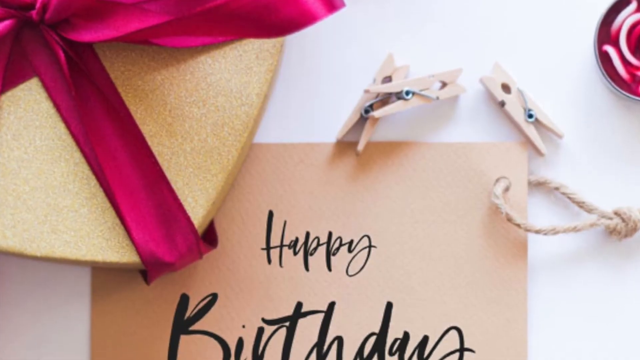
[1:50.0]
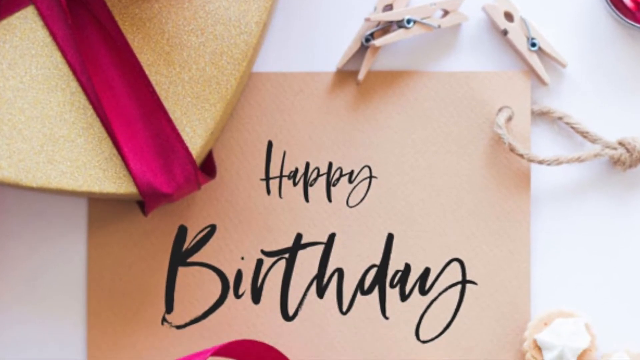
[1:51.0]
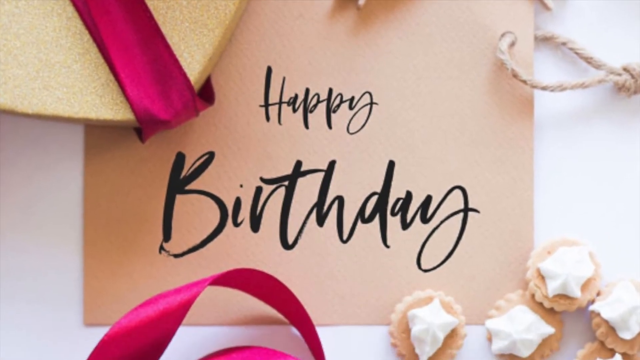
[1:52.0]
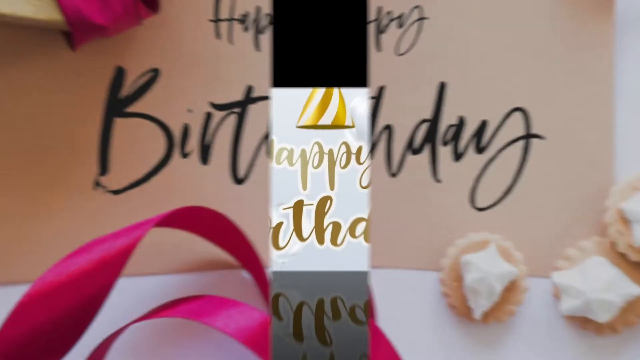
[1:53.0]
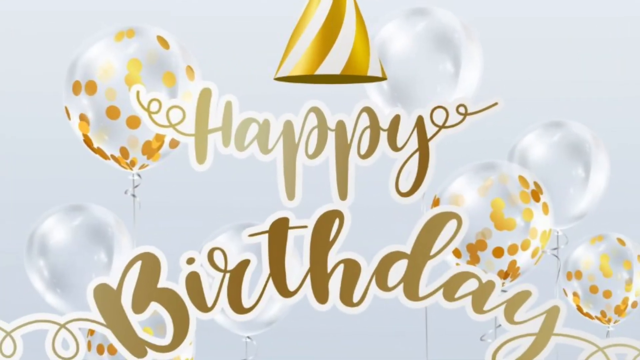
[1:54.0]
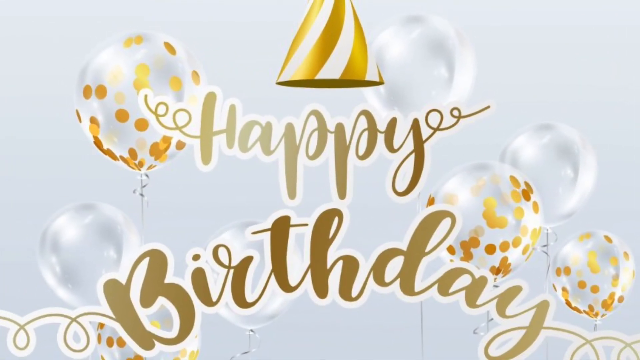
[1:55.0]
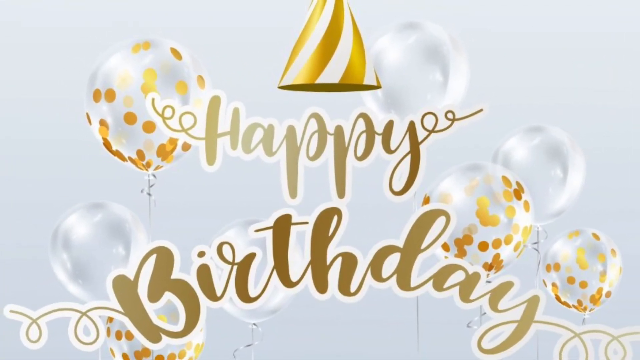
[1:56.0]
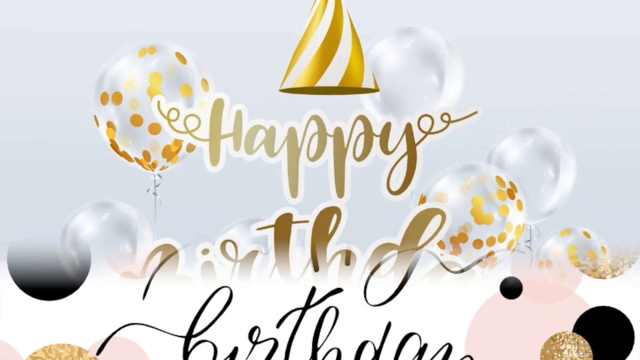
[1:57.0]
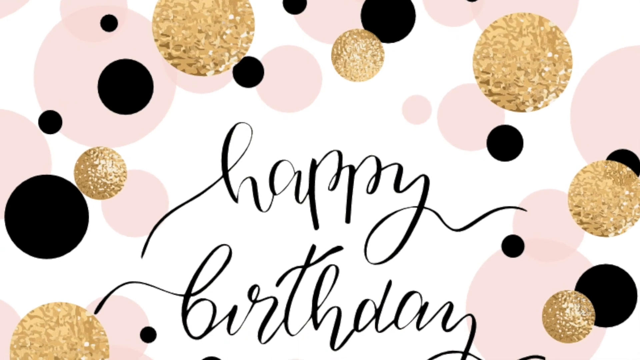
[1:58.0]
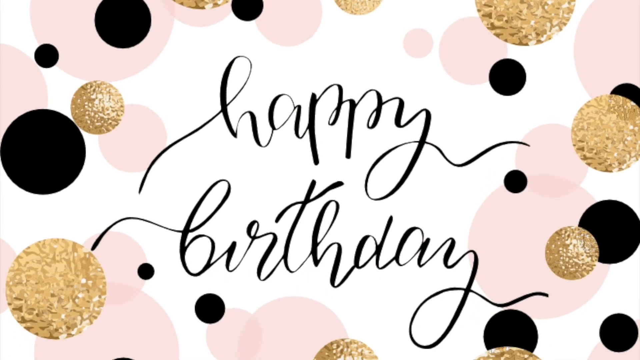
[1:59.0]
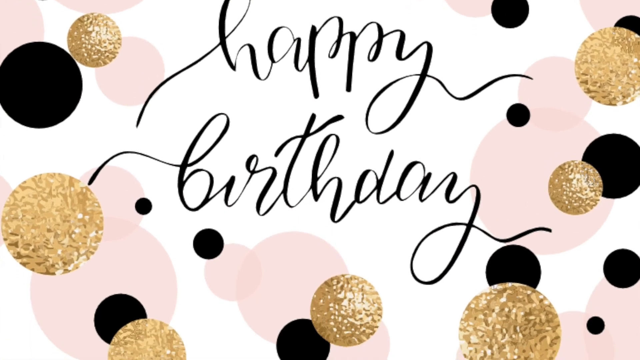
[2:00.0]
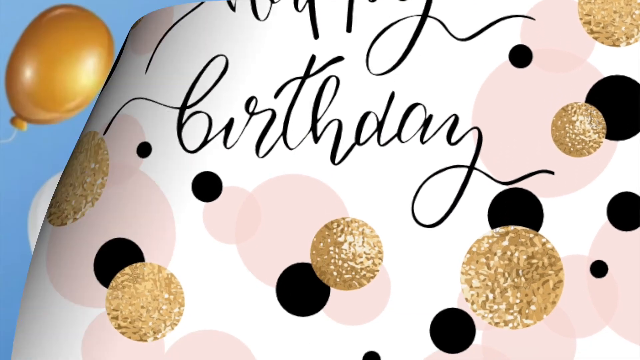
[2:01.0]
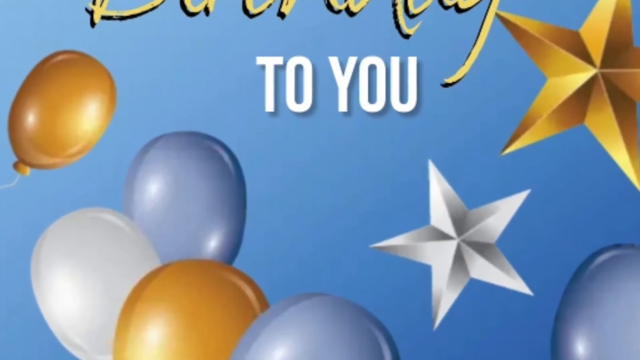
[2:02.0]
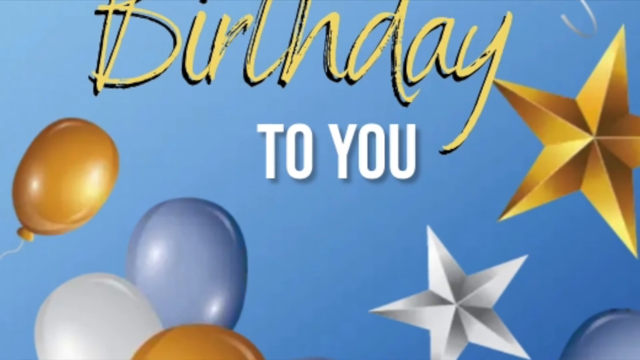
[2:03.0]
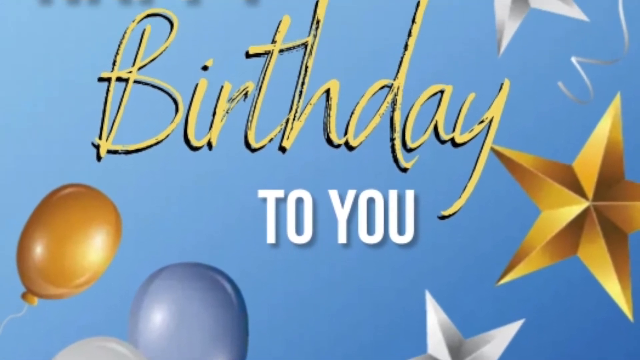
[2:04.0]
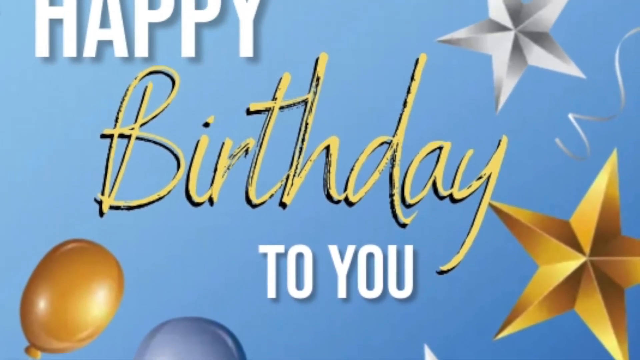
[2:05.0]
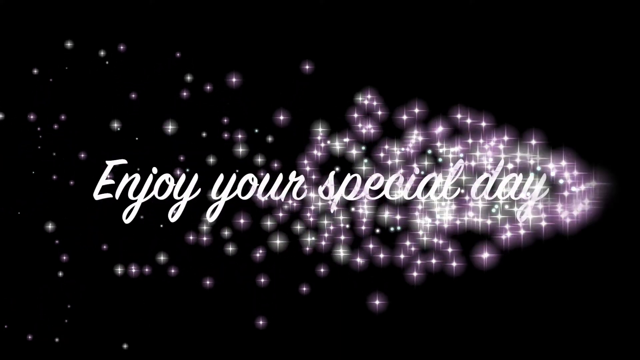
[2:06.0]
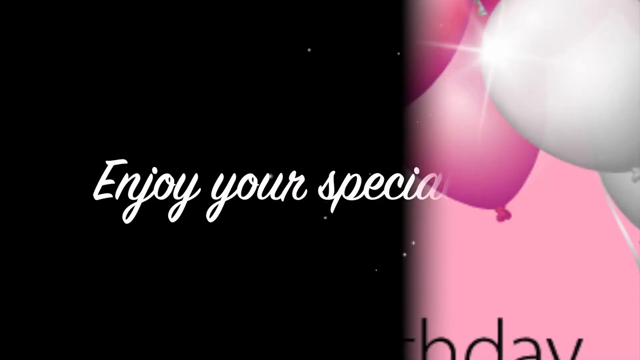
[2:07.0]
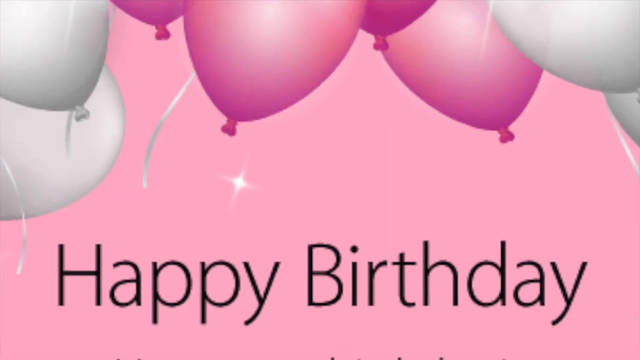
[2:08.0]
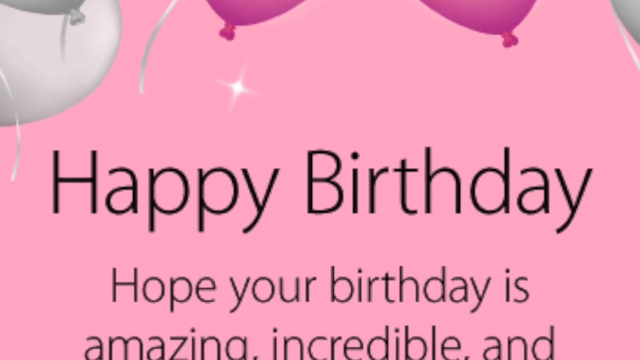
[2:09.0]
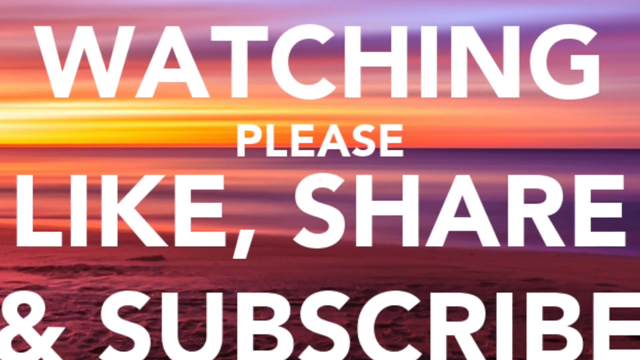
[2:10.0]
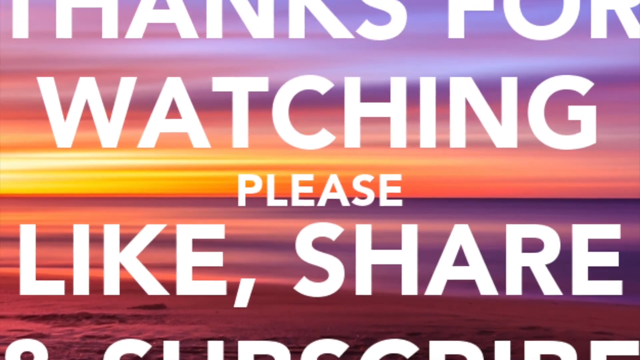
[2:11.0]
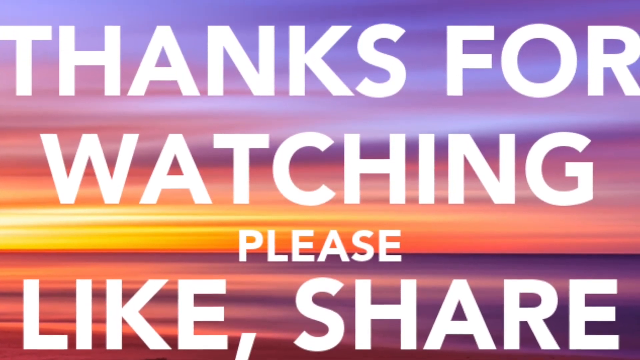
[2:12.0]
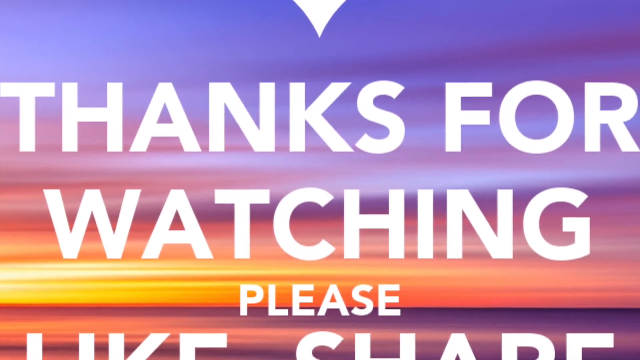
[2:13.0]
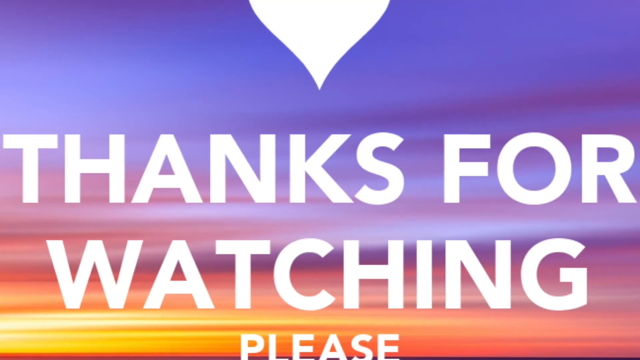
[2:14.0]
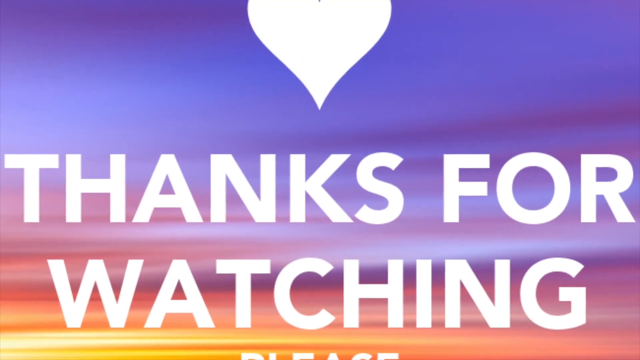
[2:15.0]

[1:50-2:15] A card says "happy birthday" in a sweeping, fake-cursive font in which "birthday" is much larger, in black text on a beige envelope; the envelope has a cord threaded through it and ribbons around it, on a white background. The view pans up, then the card splits open vertically down the middle and pulls away, revealing another card that says "happy birthday" in gold text with a white outline in a comic, stylized cursive font, with balloons and a party hat behind it on a white background. It pulls up to another card that says "happy birthday" in a sweeping italic font, with stylized, apparently party balls or disco balls on a golden plaque. It pulls away, cutting to a card that says "happy birthday to you," with "happy" and "to you" in one font and "birthday" in another for emphasis, with metallic stars in the background and balloons against a blue background that seems meant to be the sky. A black screen follows with the white sparkly effect revealing the text "enjoy your special day." The view sweeps to the side to a pink background with white and pink balloons and text including "happy birthday" and "amazing, incredible," which pulls away before the card can be read. Finally, white text against a sunset-like sky reads "watching, please like, share, subscribe," and as it pulls up, the message is shown to be "thanks for watching," with a cut-off heart.